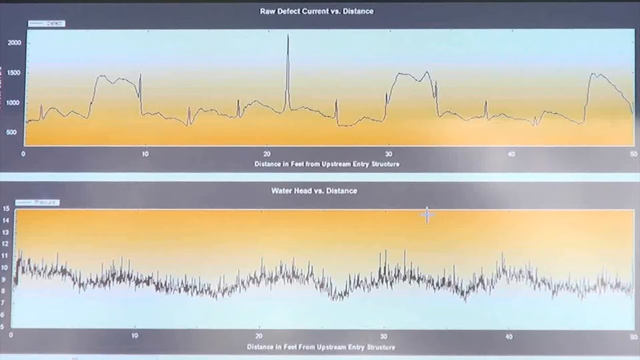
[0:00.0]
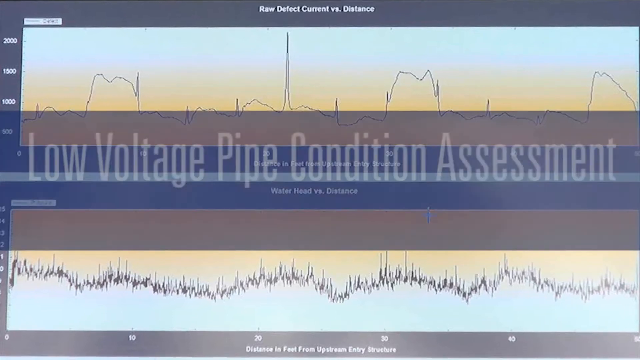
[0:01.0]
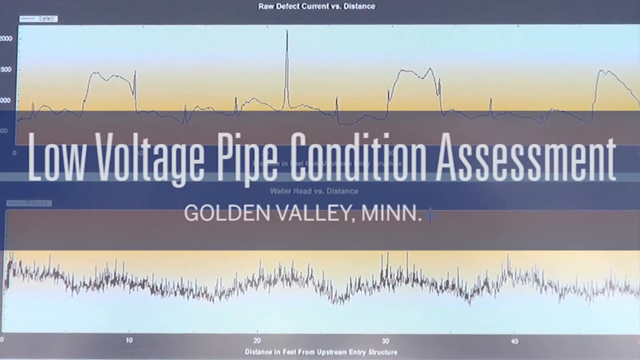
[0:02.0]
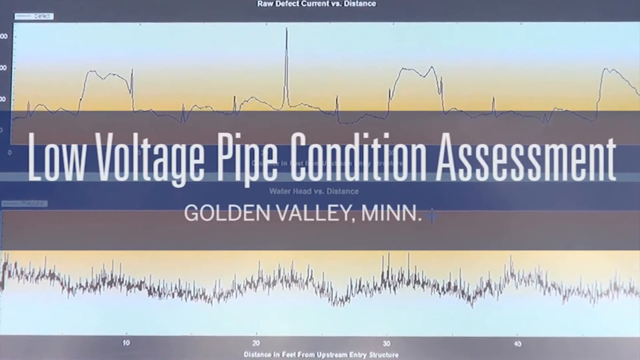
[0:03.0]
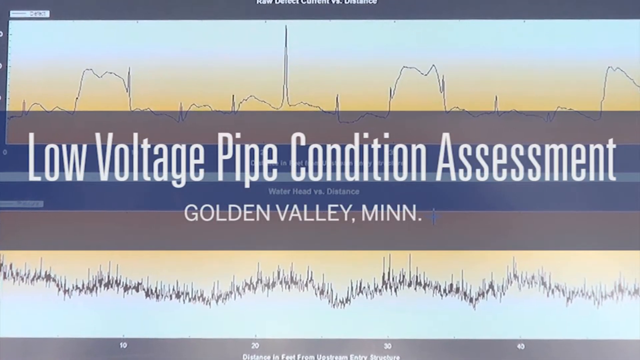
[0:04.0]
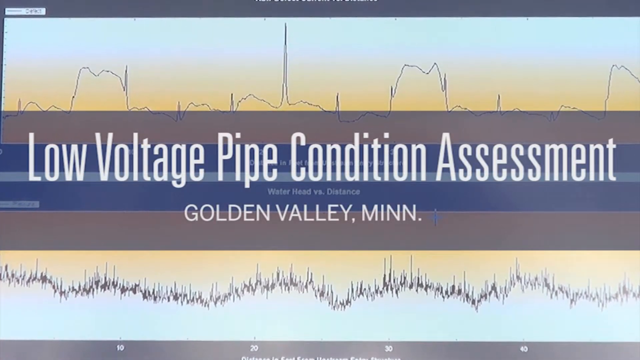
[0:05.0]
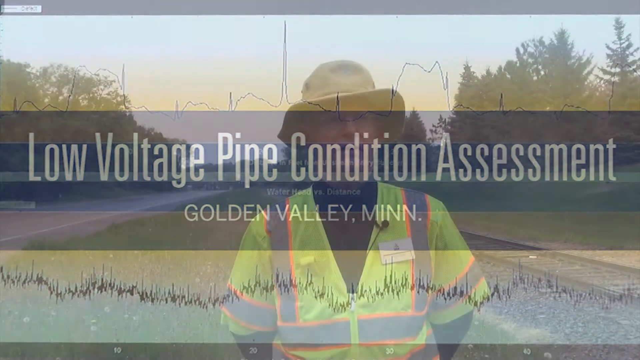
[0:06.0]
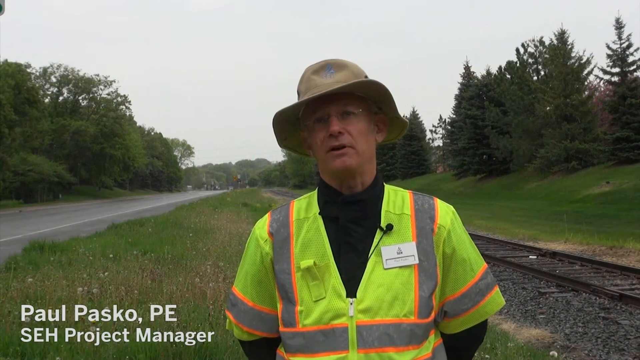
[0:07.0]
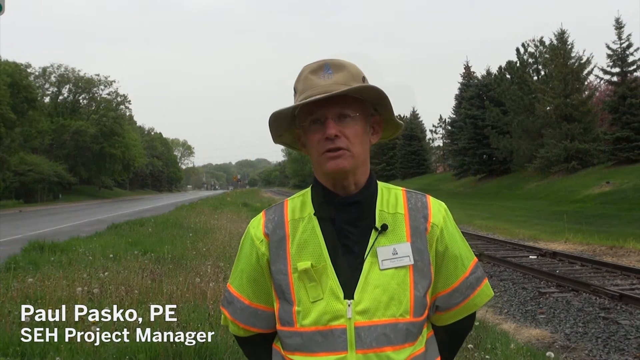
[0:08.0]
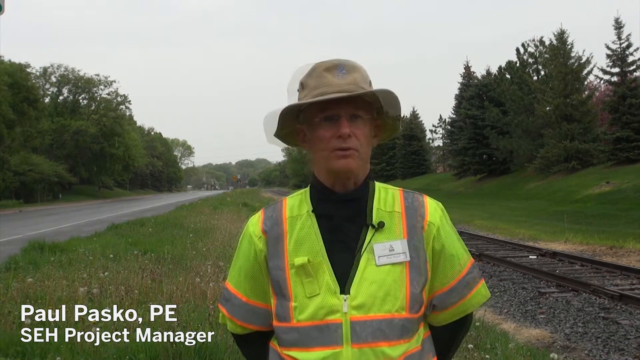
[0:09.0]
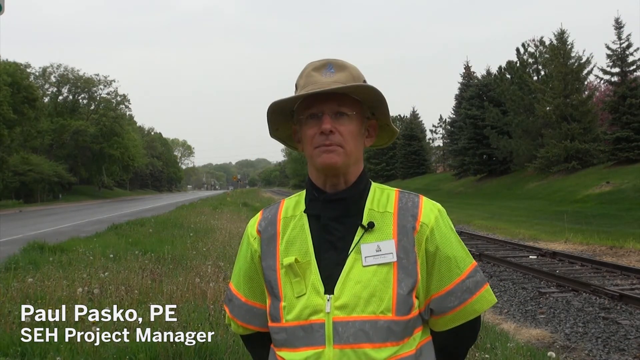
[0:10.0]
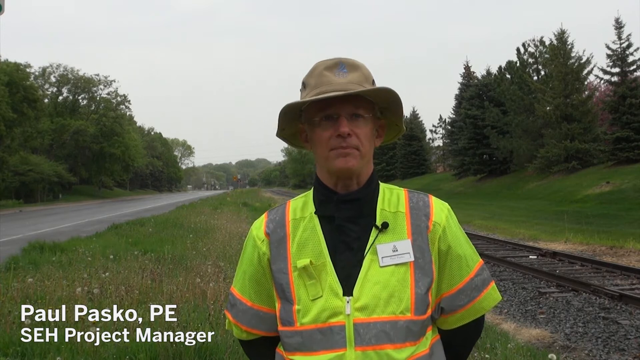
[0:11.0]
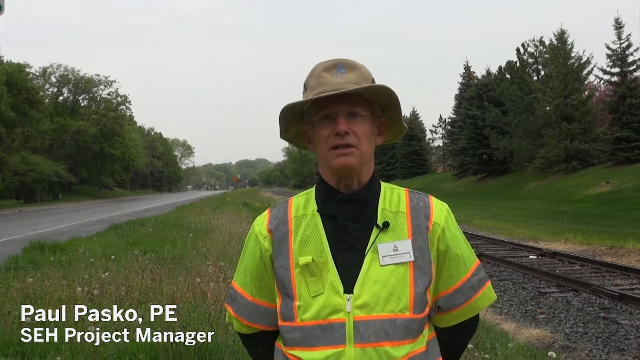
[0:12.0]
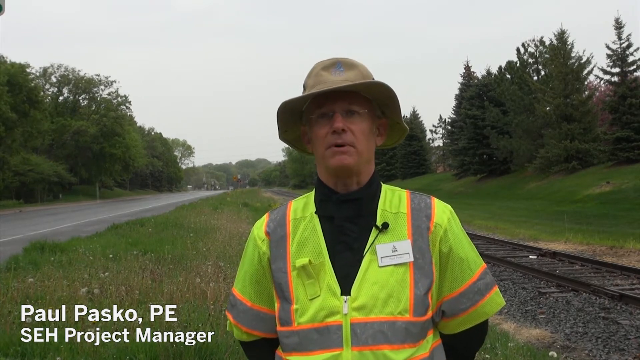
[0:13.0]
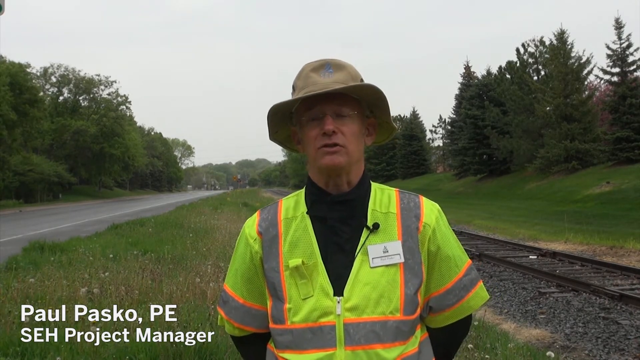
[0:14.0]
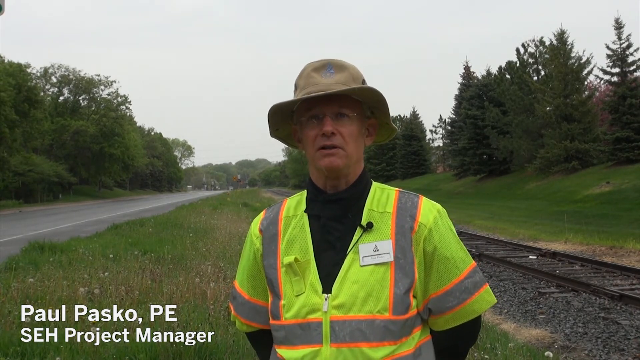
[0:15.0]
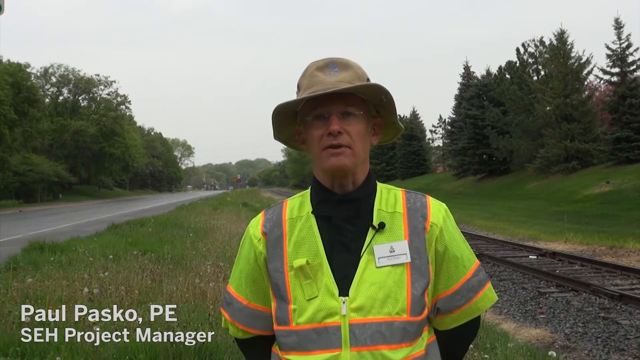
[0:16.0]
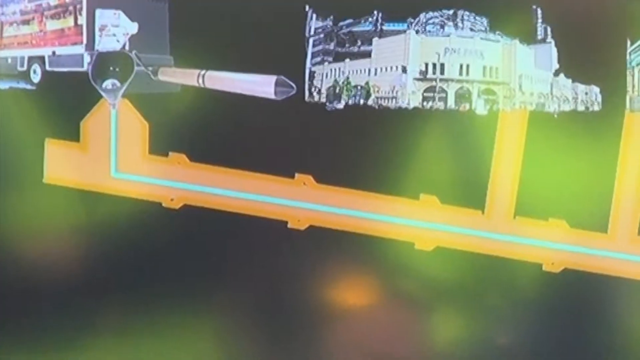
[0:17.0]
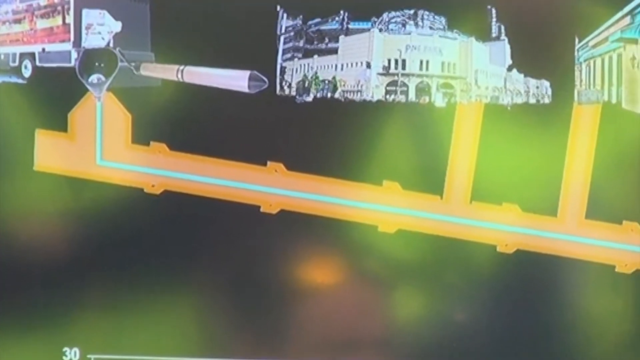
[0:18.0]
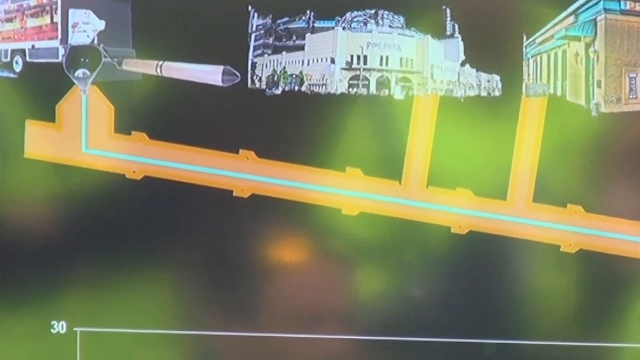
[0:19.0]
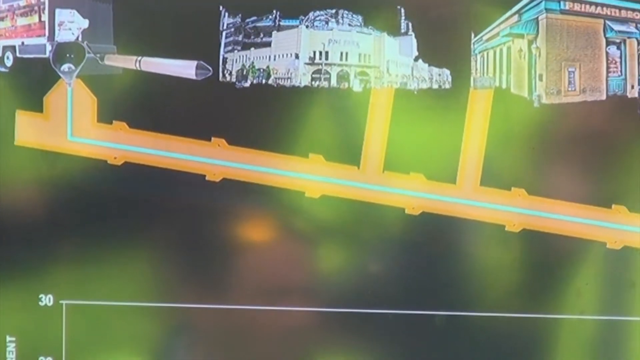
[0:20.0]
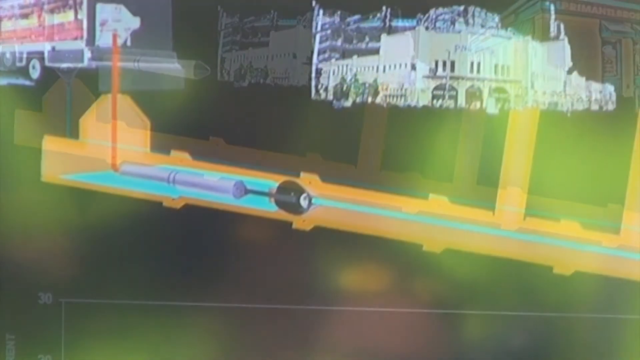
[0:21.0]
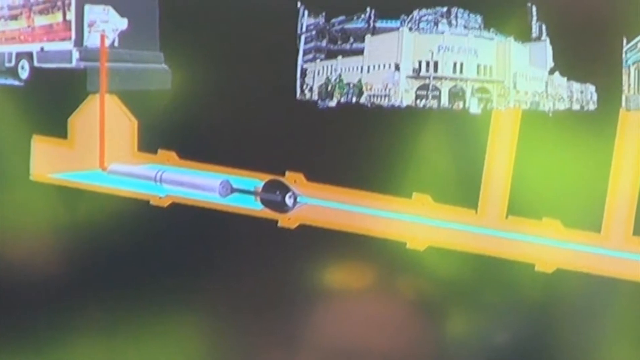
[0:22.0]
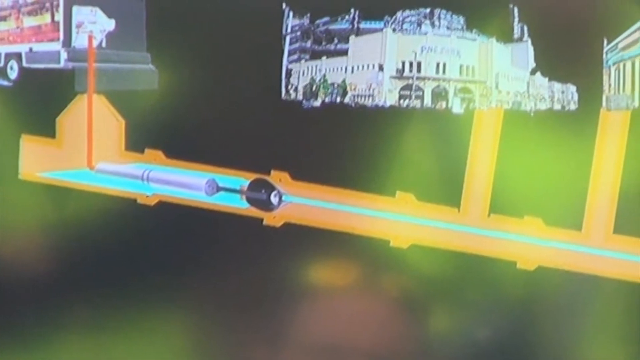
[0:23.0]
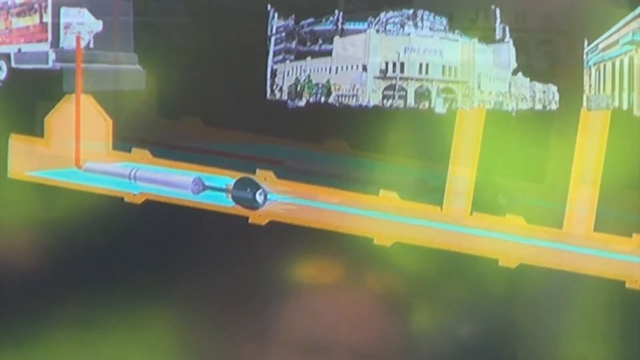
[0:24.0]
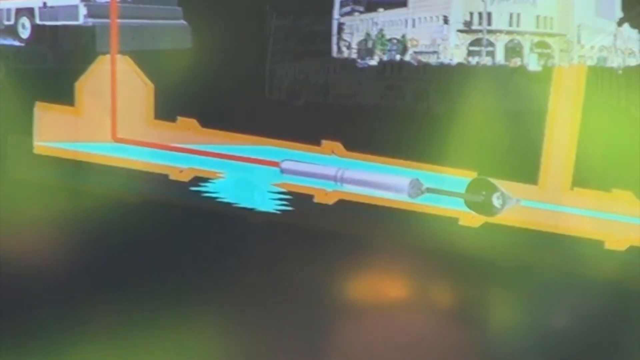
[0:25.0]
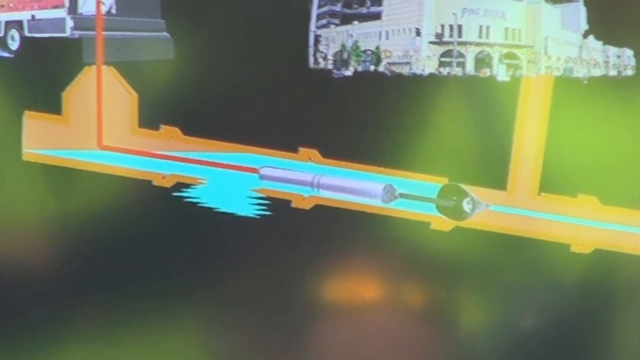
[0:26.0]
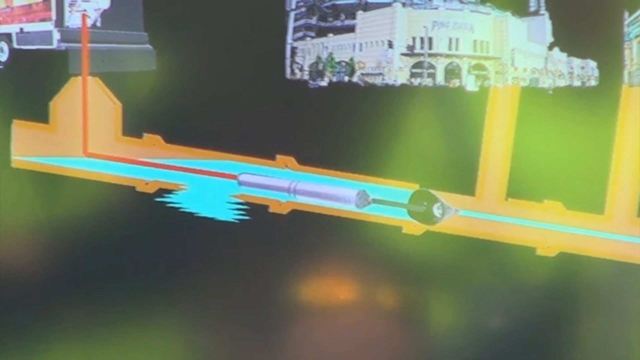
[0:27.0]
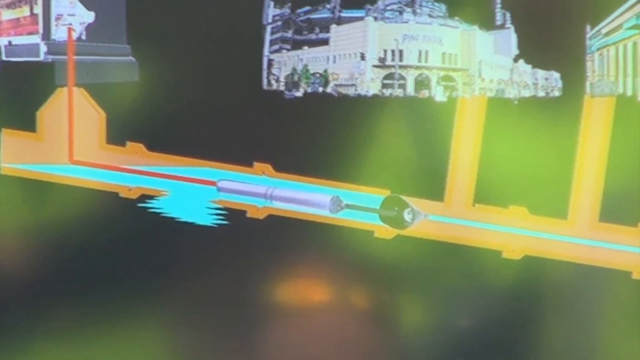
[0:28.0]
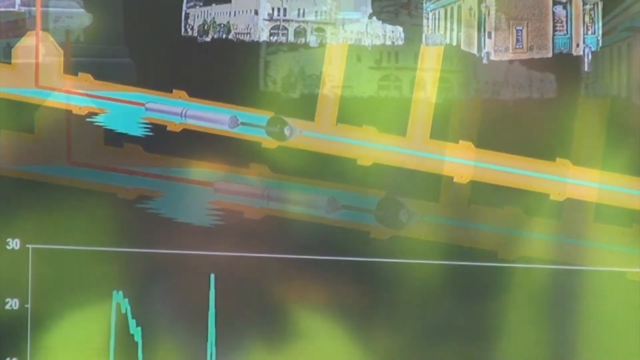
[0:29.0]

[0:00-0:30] The video opens on what looks like a graph of a heartbeat at the top and another at the bottom, where the spikes are closer together, and he says "low voltage pipe condition assessment." The view then moves in as the video plays. A worker appears outside under cloudy, gray skies, wearing an orange-yellow or yellow-green smock or jacket, a black shirt, a tan hat and glasses. He is by the side of a road in a grassy area with a bunch of trees, and it is raining. He holds a microphone and talks to the camera. As he speaks, a graphic shows a building with some orange on a pipeline underneath the ground beneath some buildings.